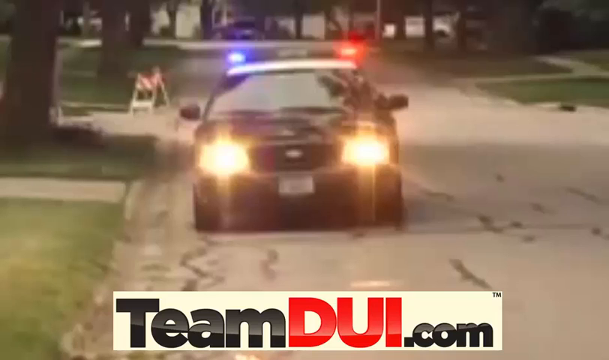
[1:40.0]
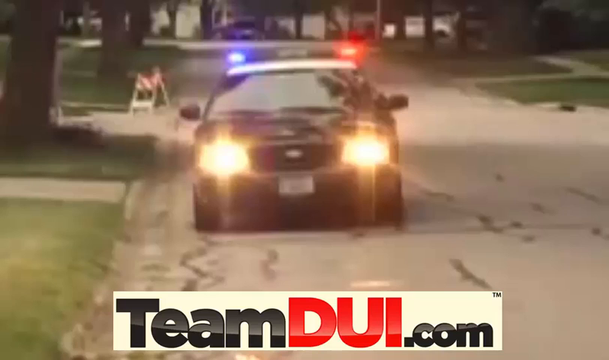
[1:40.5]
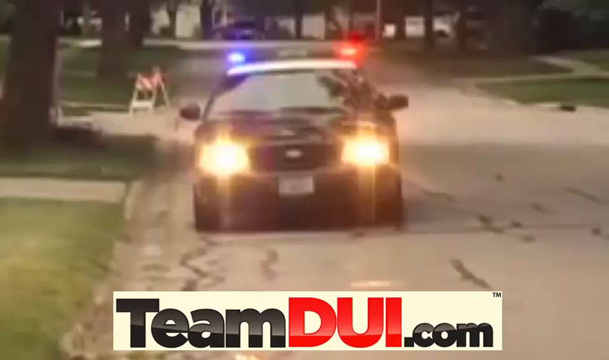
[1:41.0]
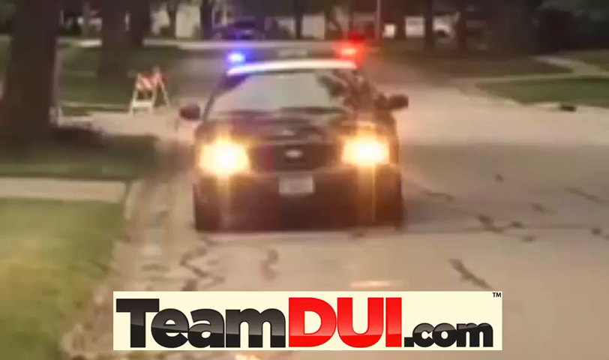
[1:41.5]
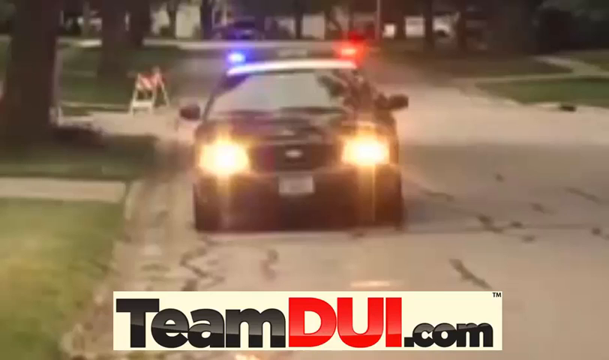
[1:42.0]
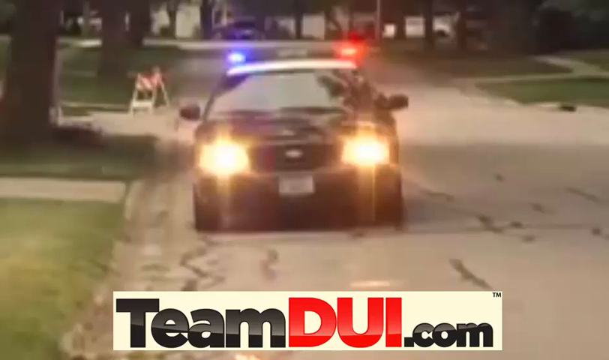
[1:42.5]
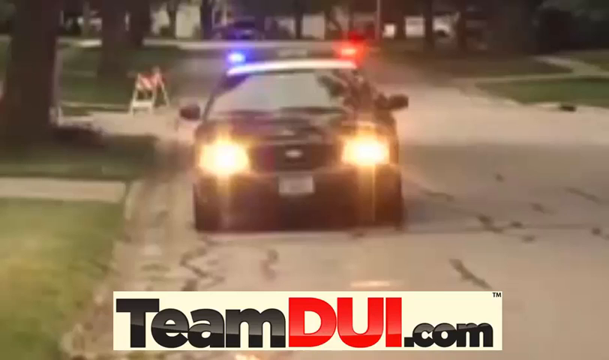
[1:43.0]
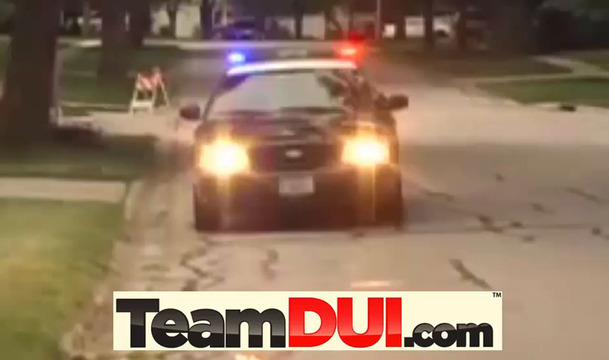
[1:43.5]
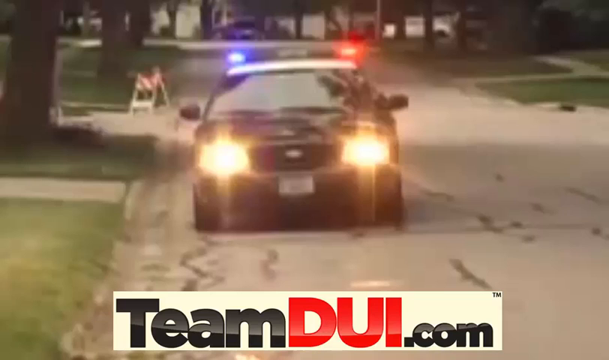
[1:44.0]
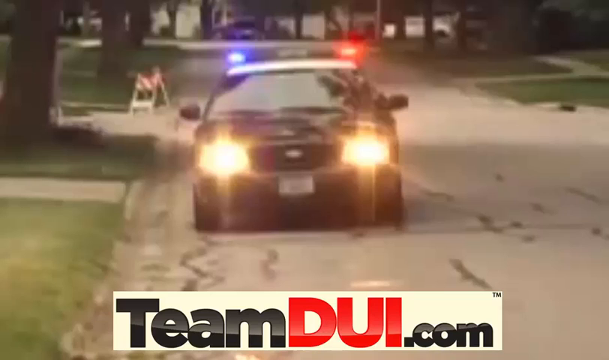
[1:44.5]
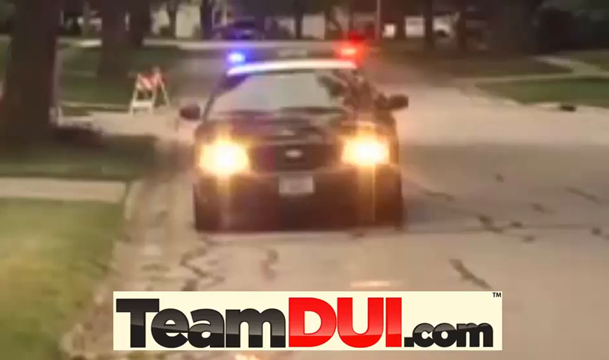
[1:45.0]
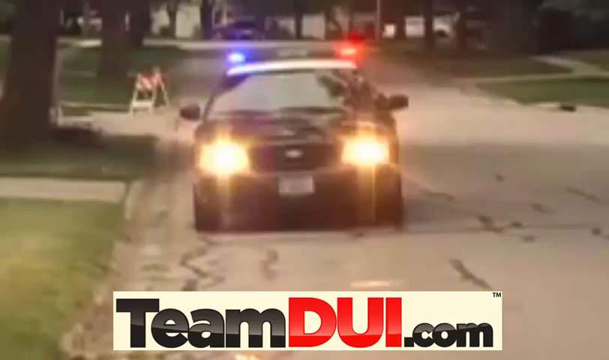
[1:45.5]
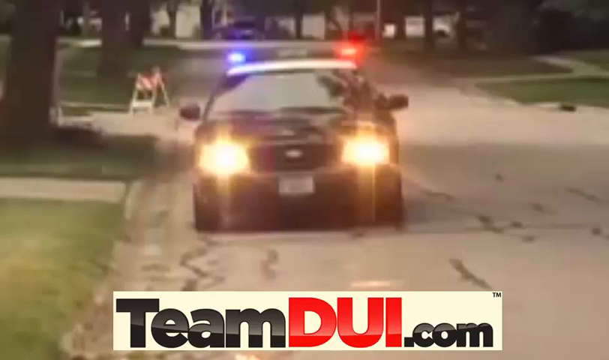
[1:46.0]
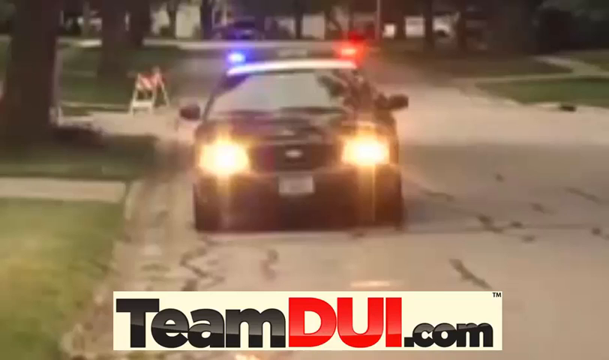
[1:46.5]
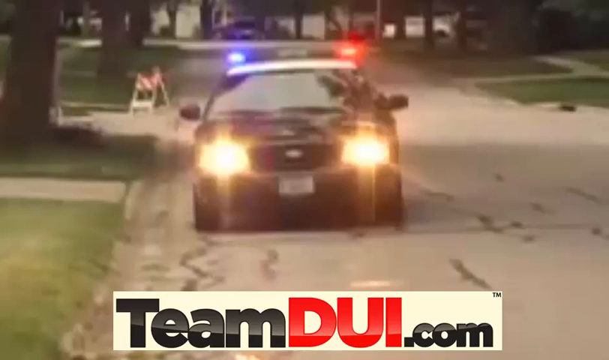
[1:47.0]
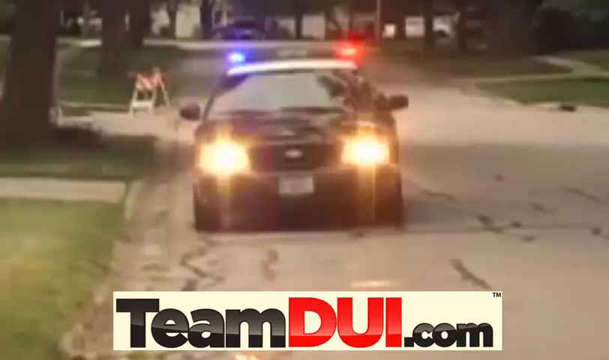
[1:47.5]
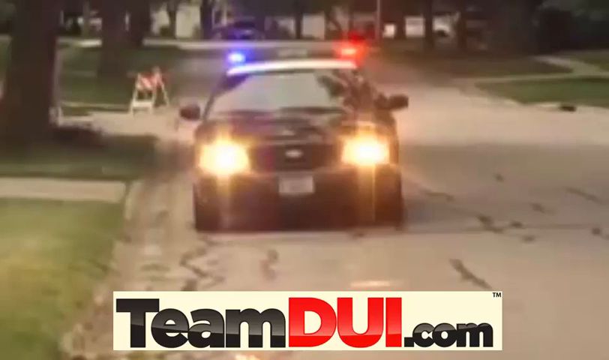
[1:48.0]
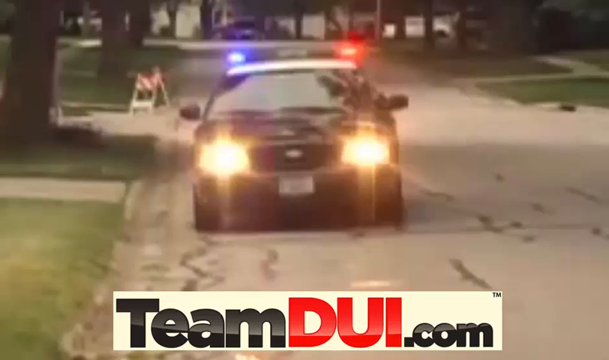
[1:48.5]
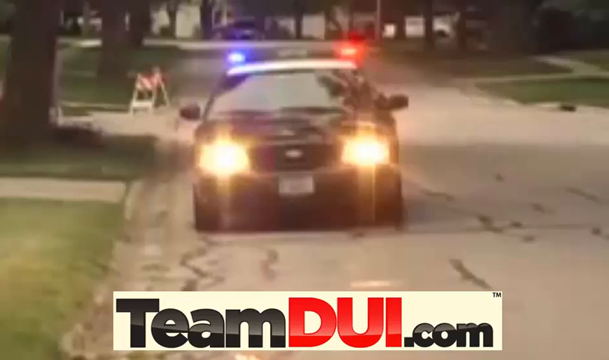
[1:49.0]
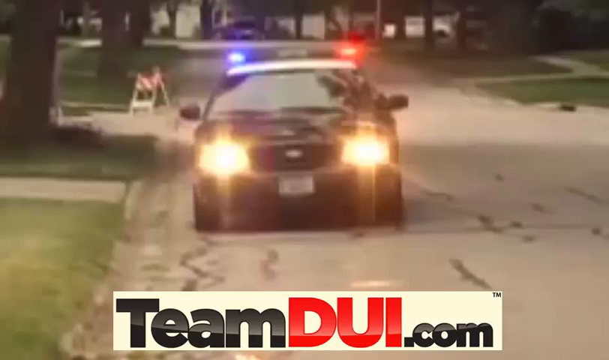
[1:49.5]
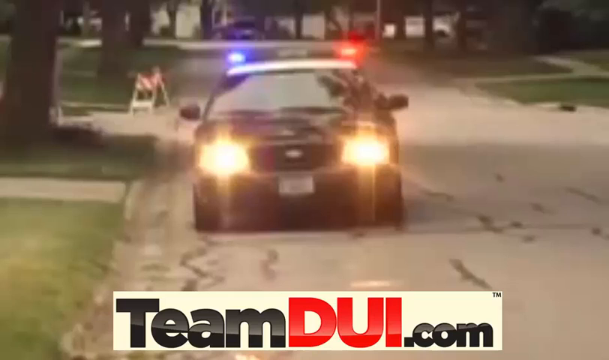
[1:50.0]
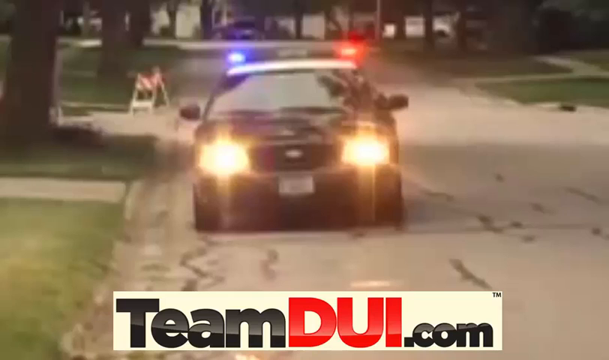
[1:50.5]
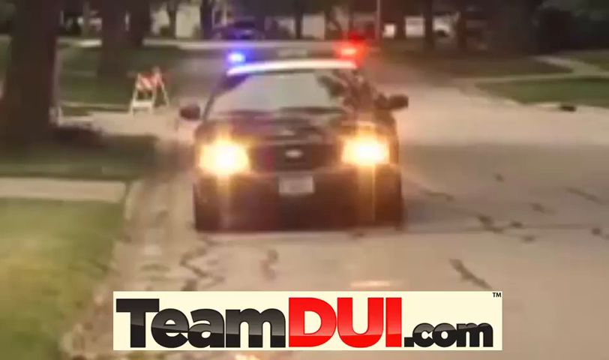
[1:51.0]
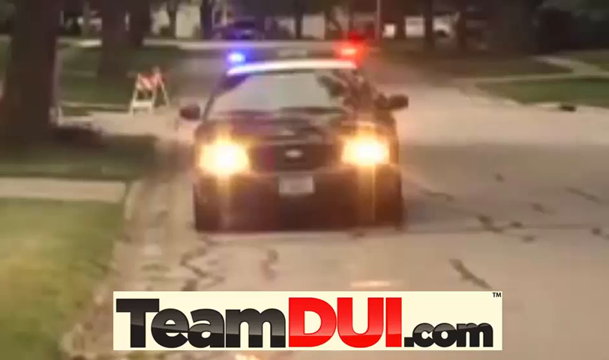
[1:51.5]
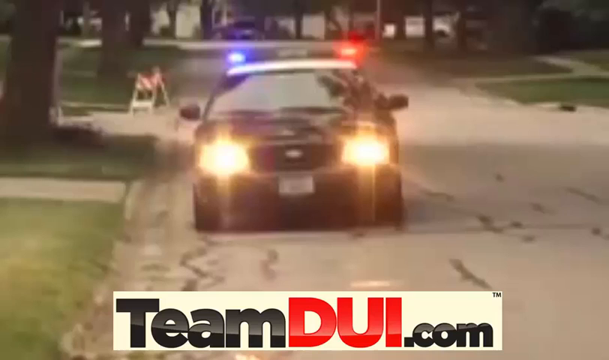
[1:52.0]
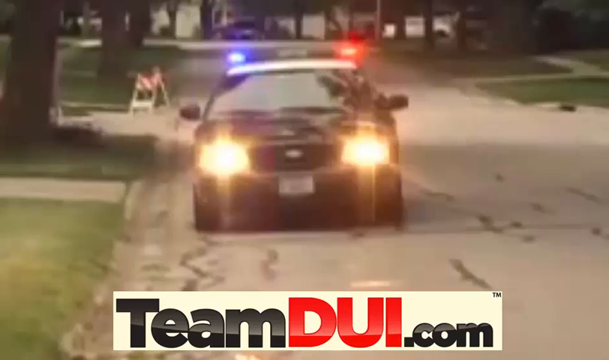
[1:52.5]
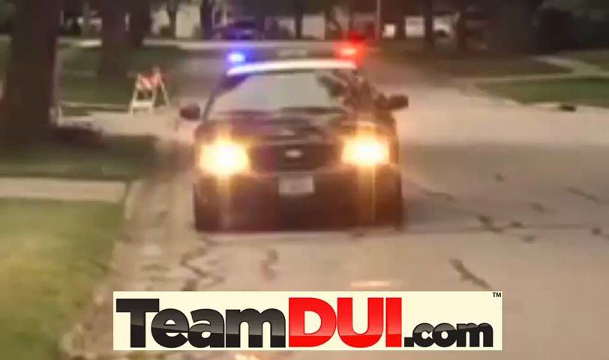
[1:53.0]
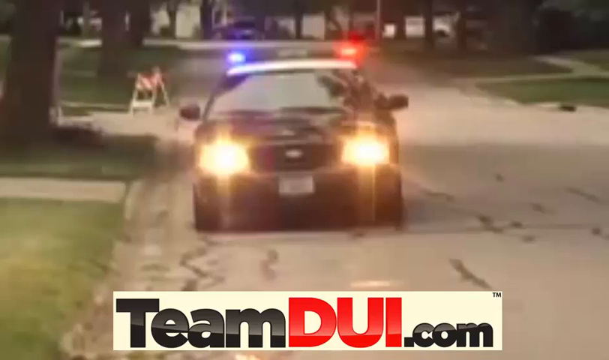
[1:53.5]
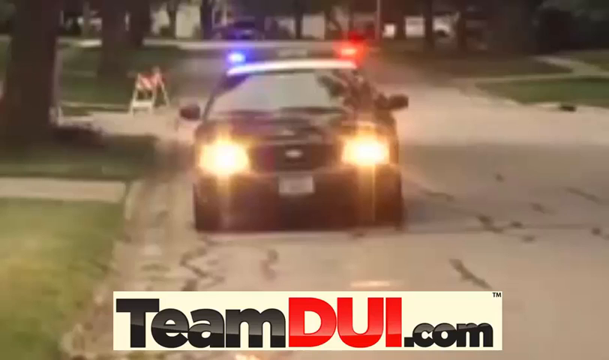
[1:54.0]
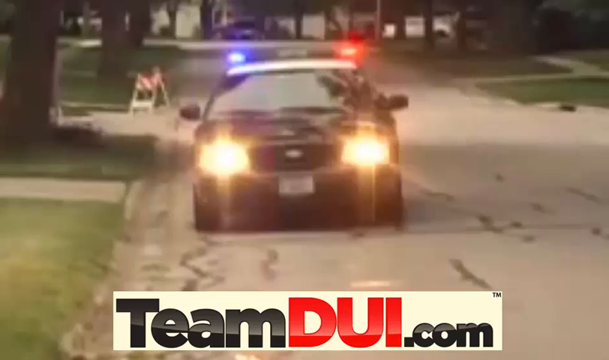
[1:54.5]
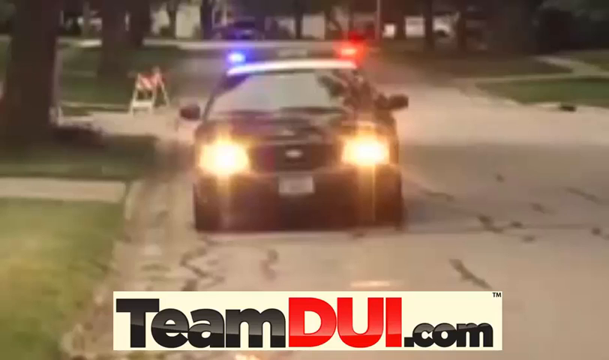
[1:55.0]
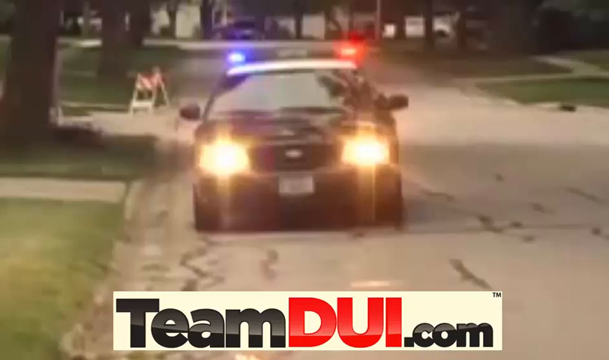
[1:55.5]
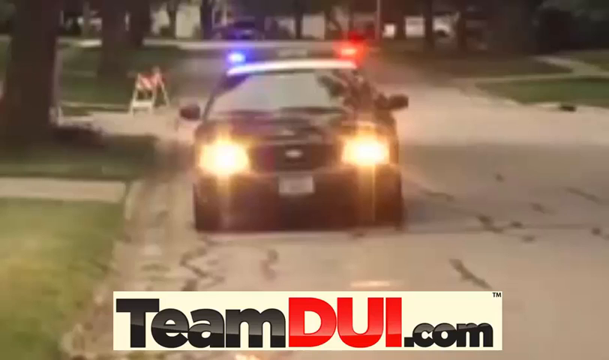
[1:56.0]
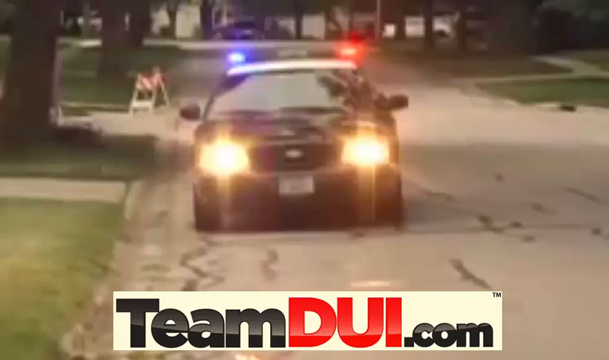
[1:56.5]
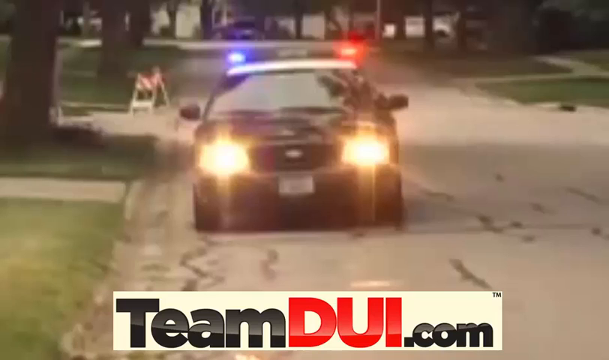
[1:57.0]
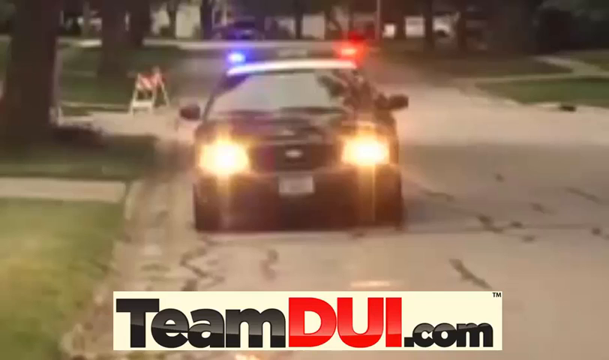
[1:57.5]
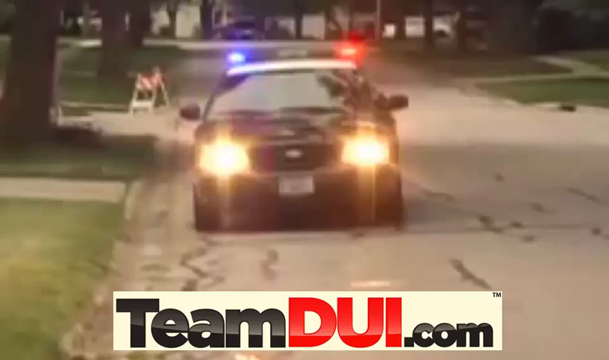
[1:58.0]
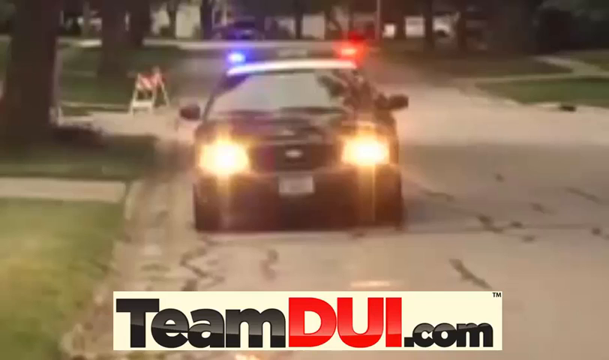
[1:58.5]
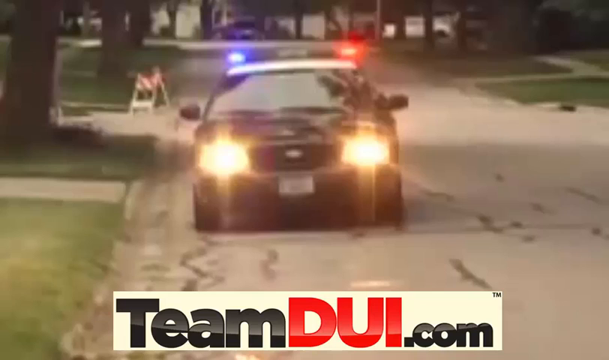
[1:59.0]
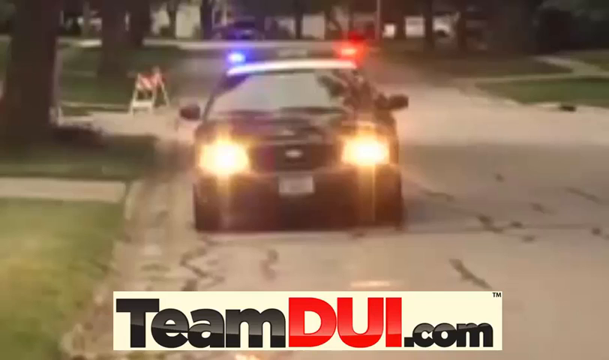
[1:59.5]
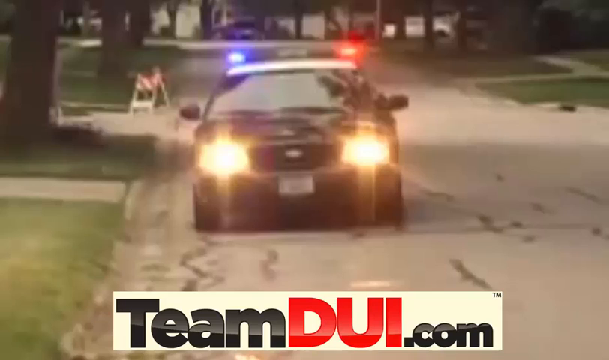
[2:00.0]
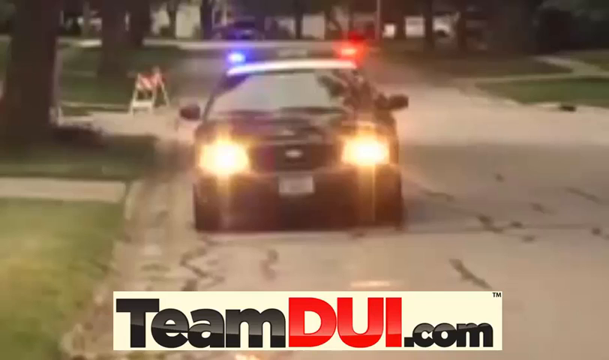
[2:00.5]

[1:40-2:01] A police car comes toward the viewer with its lights on, both the red and blue lights and the headlights. There is green grass, and the setting kind of looks like a residential neighborhood. At the bottom is the TeamDUI.com logo in a kind of beige banner, with "TM" in the top right-hand corner. It is the same logo as at the beginning with the drinks: "team" in black, "DUI" in red capitals, and ".com" in black.